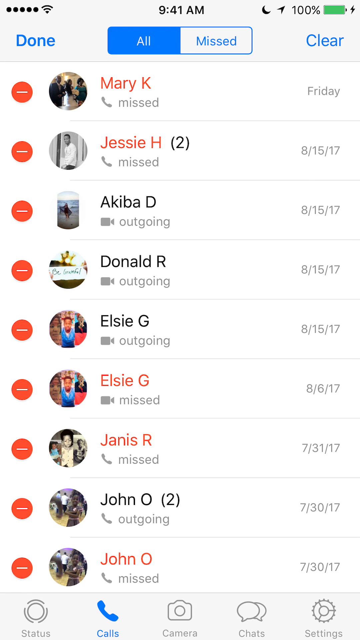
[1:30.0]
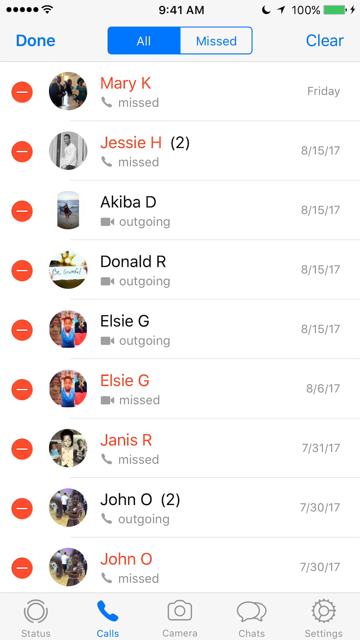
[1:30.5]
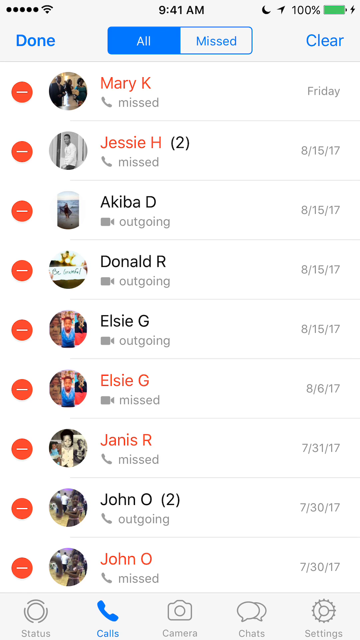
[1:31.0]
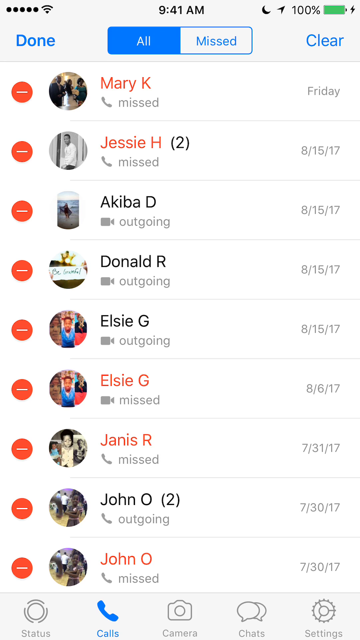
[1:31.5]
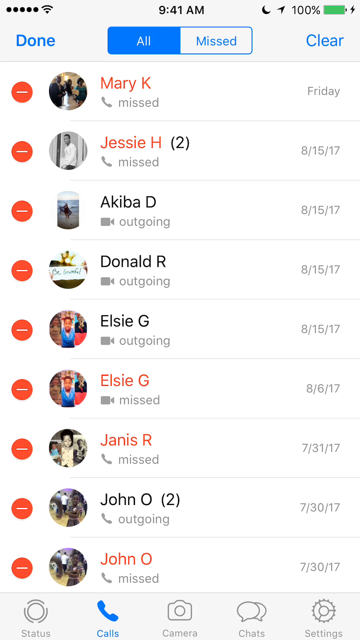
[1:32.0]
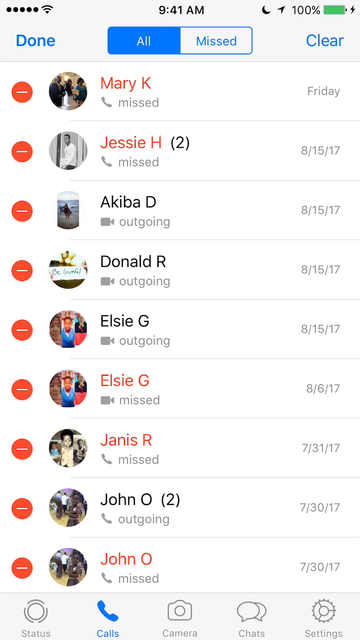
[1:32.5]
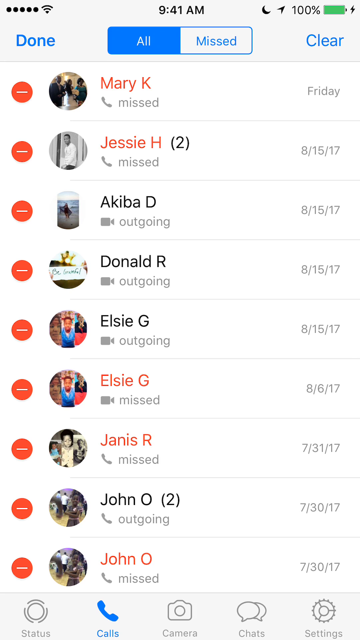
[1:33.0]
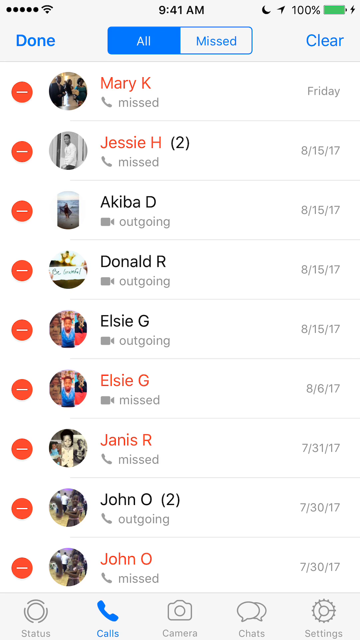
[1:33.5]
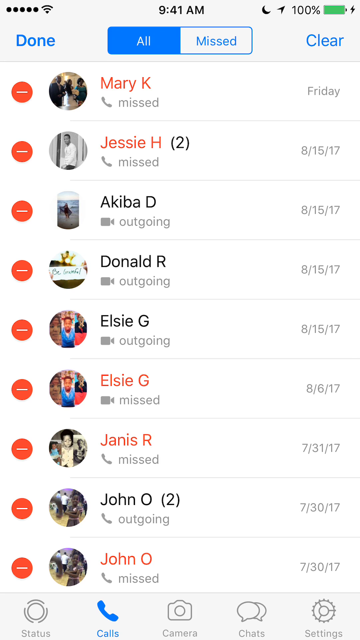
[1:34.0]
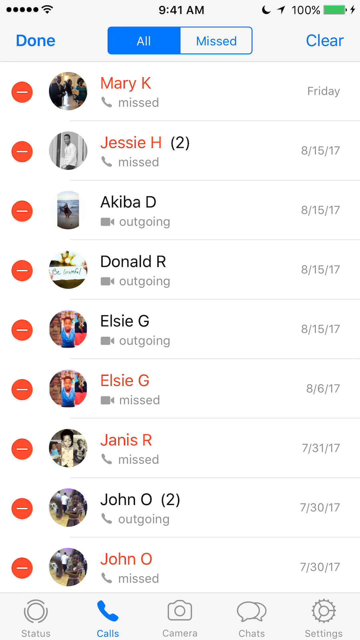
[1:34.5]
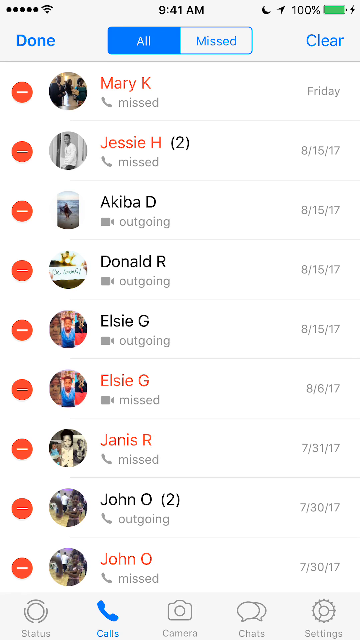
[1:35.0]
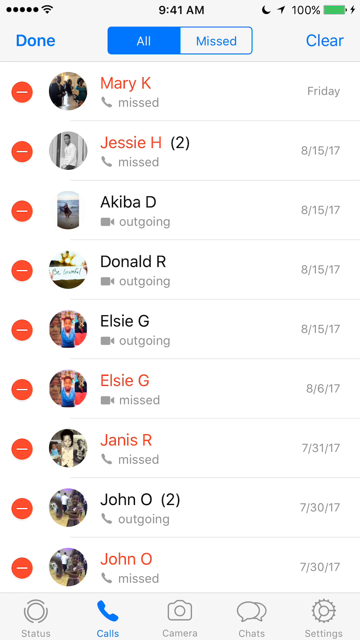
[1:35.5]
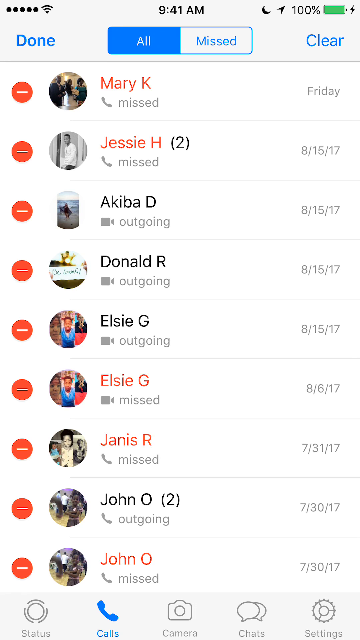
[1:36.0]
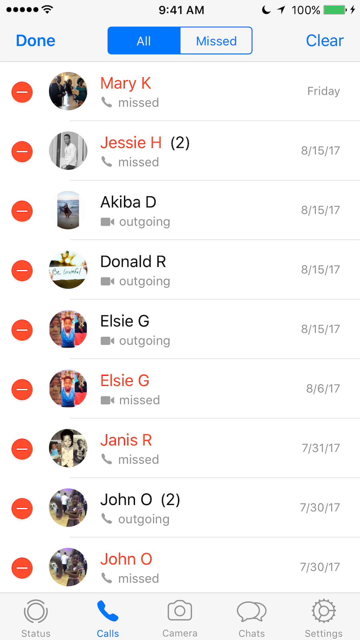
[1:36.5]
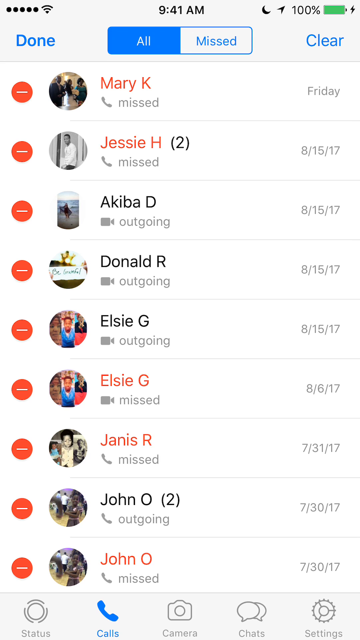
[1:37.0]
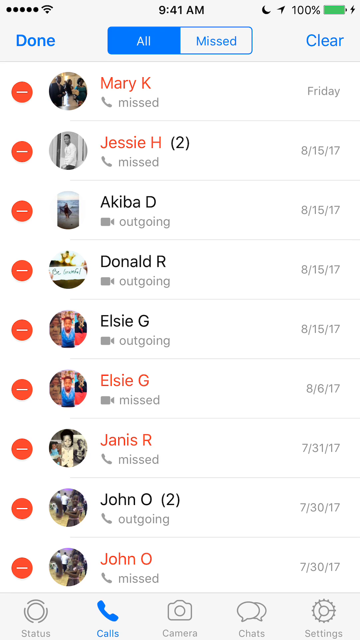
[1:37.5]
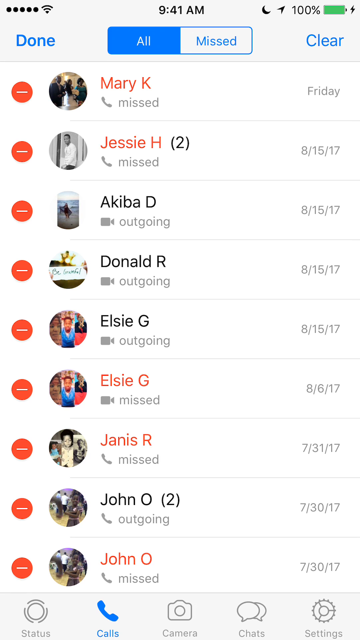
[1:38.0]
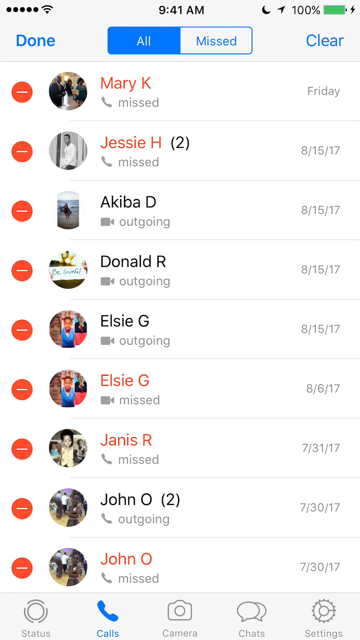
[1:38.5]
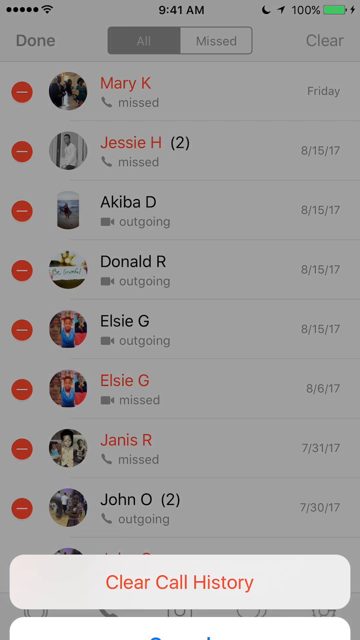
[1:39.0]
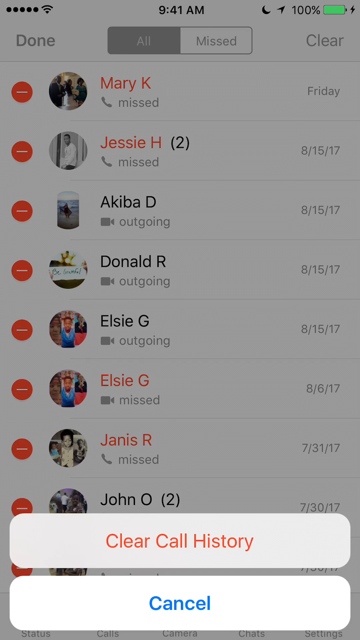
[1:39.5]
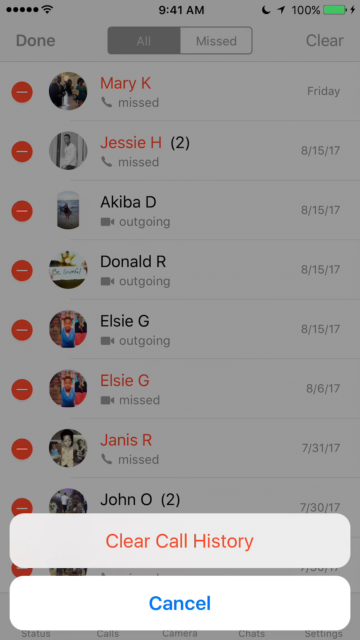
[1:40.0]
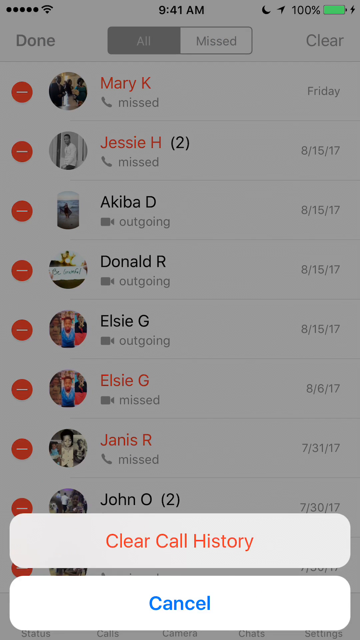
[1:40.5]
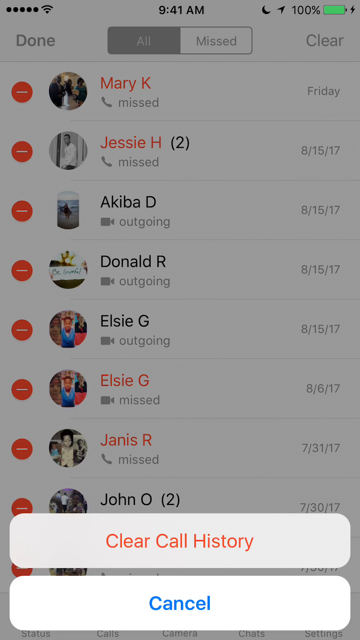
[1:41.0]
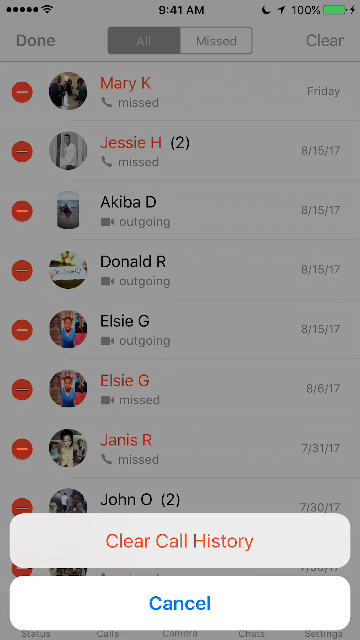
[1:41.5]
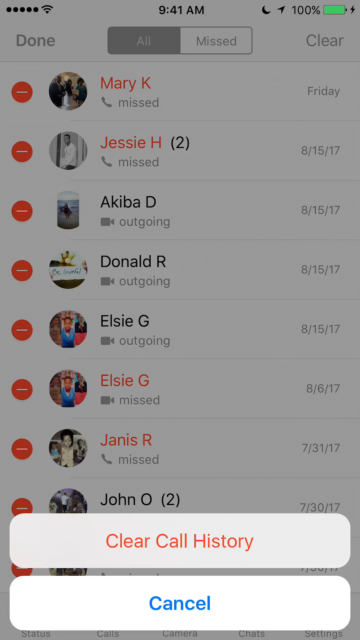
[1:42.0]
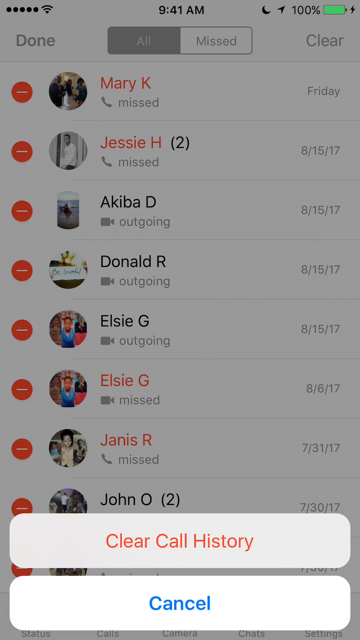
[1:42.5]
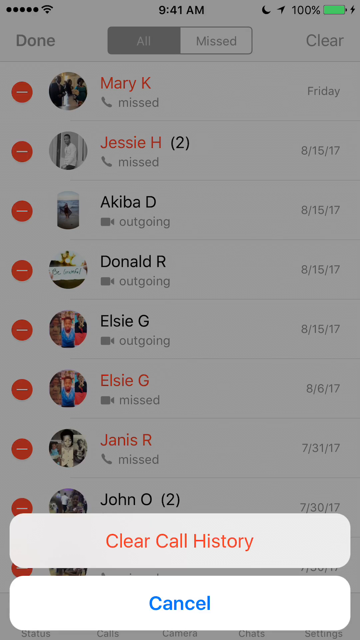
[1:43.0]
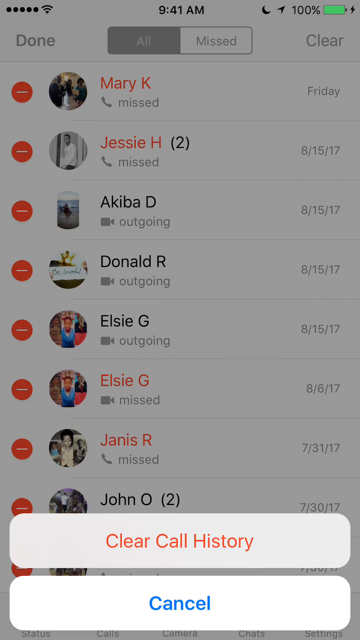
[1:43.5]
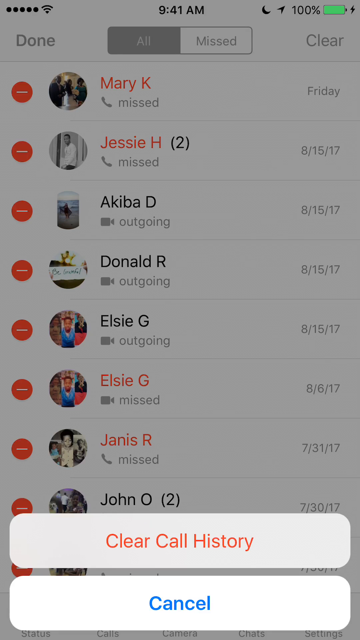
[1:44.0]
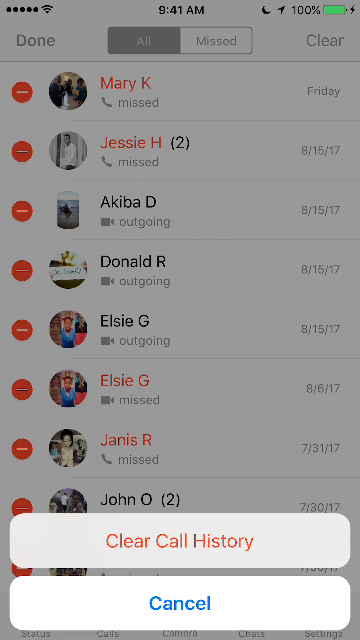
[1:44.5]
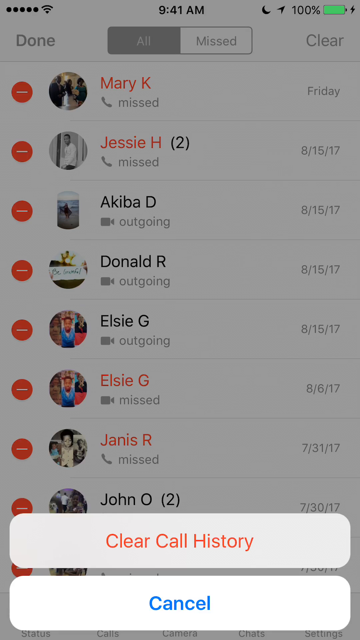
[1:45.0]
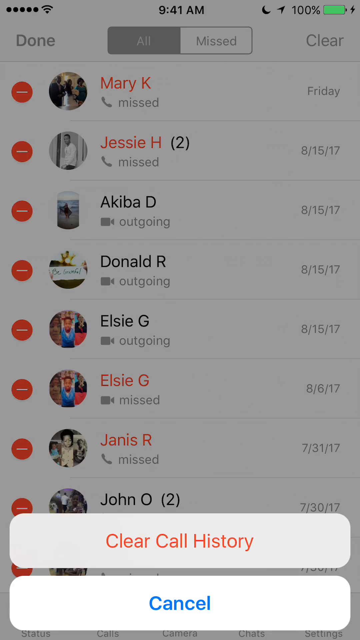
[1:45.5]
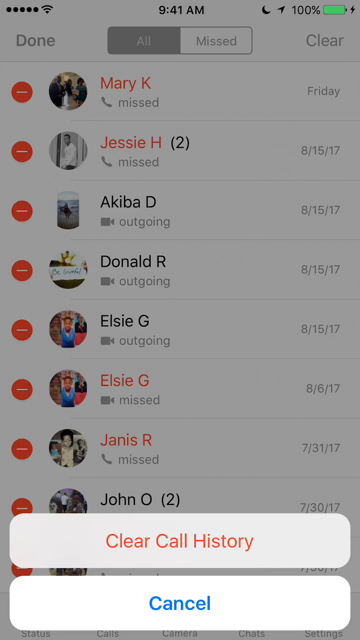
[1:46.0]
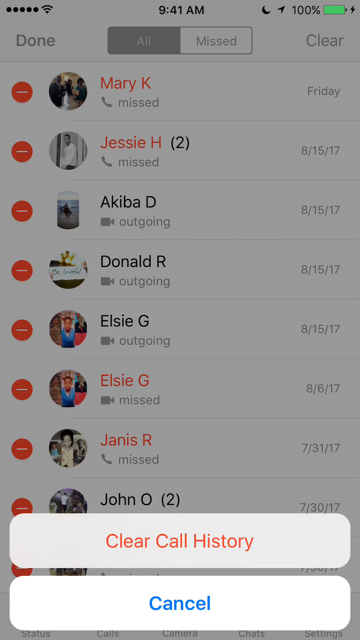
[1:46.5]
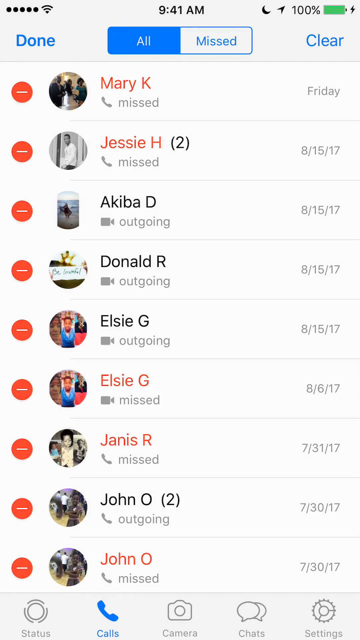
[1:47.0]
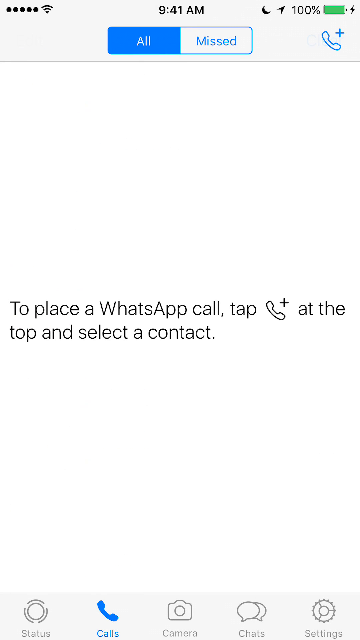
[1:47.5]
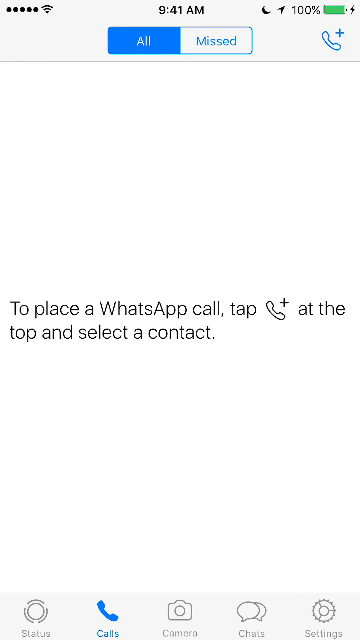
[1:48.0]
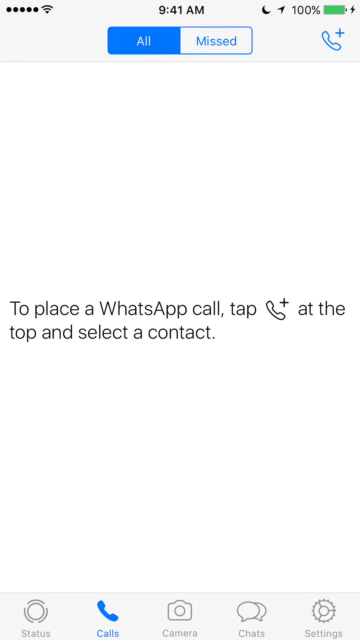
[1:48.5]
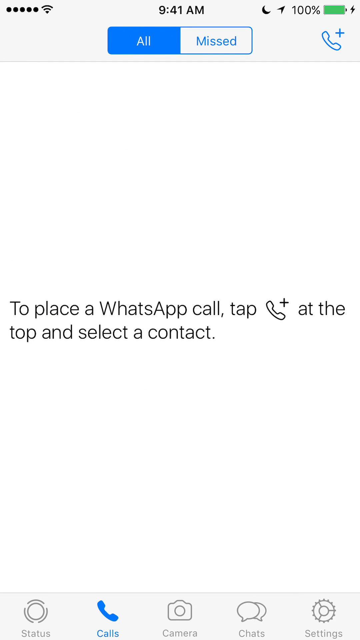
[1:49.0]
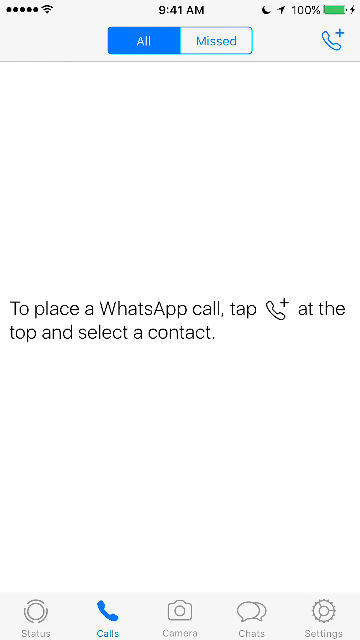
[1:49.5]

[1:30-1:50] The call logs of an iPhone show "done" in the top left. In the center are two adjacent boxes, "all" on the left, highlighted in blue, and "missed" on the right with a white background; on the right side is the word "clear". A list of names and call entries shows Mary Kay at the top, then Jessie H, Akiba D, Donald R, Elsie G, another Elsie G, Janice R, John O, and another John O, each with a picture to the left and the dates of the calls on the right. To the left of each picture is a red circle with a horizontal white line in it. After a few seconds, a black translucent filter covers the background and two bubbles pop up at the bottom: the first reads "clear call history" in red and the bottom one reads "cancel". After a few seconds, the clear call history button appears to be selected, and another screen follows where all the calls seem to be cleared. In the center it reads "to place a WhatsApp call, tap Phone Plus at the top and select a contact". The same icons as on the prior screen run along the bottom: a camera in the center, a blue phone to its left, two messaging bubbles to its right, a cog with "settings" underneath on the right side, and on the far left a circle with multiple curved lines going around it.